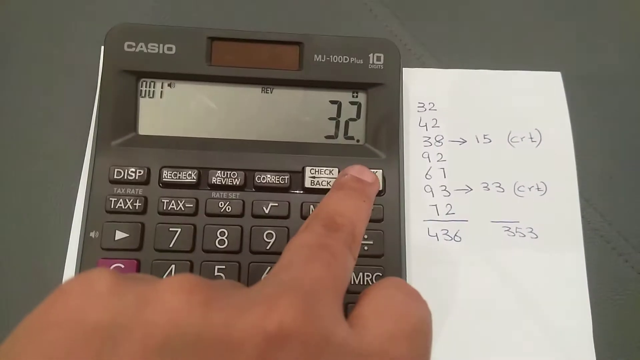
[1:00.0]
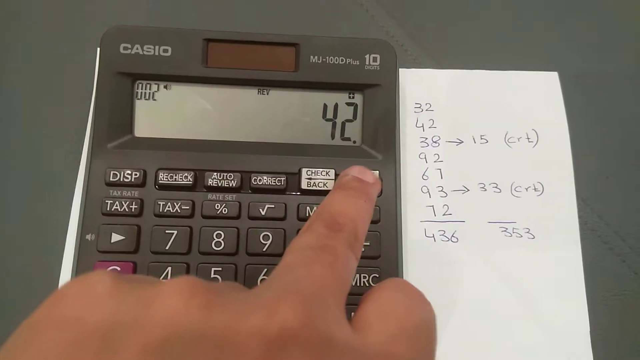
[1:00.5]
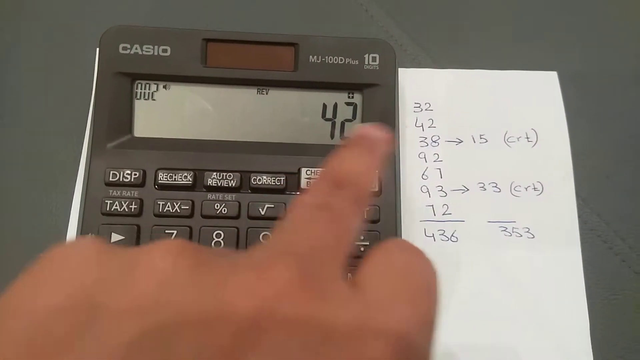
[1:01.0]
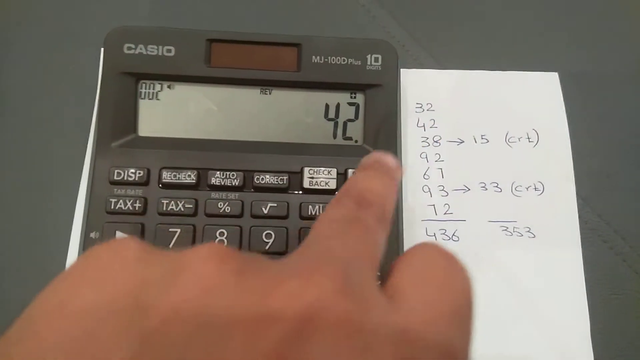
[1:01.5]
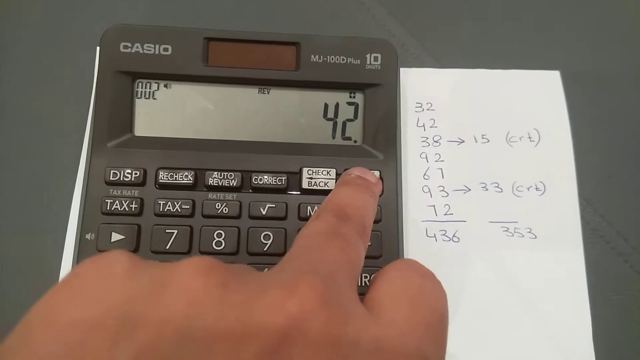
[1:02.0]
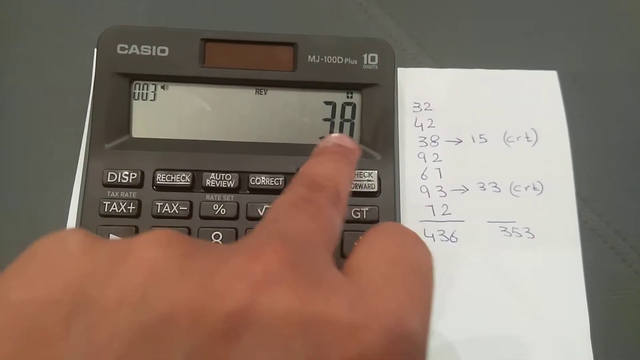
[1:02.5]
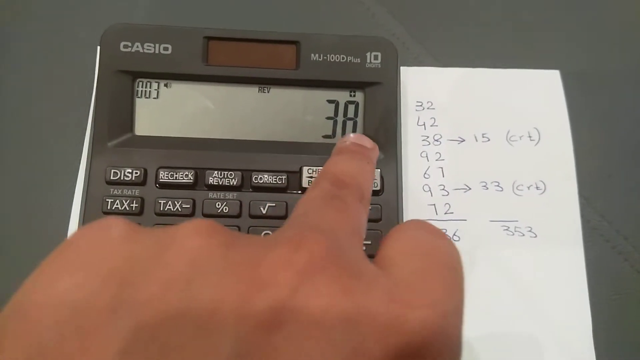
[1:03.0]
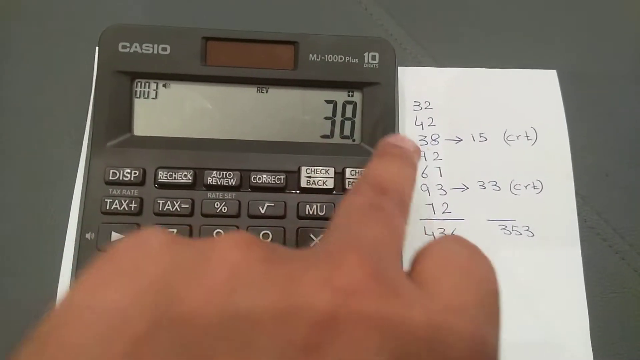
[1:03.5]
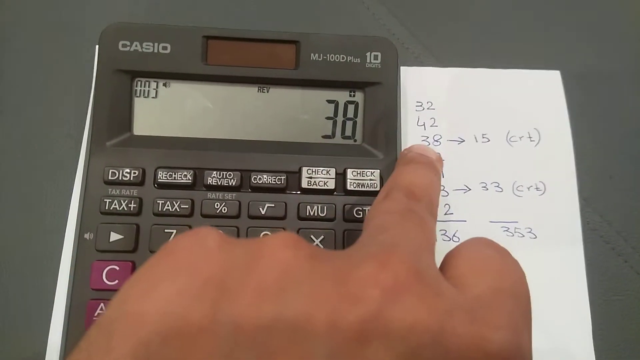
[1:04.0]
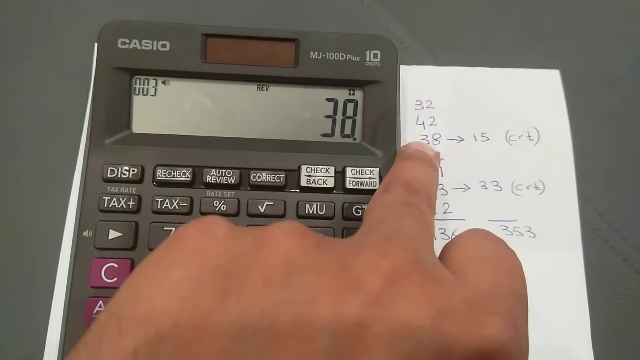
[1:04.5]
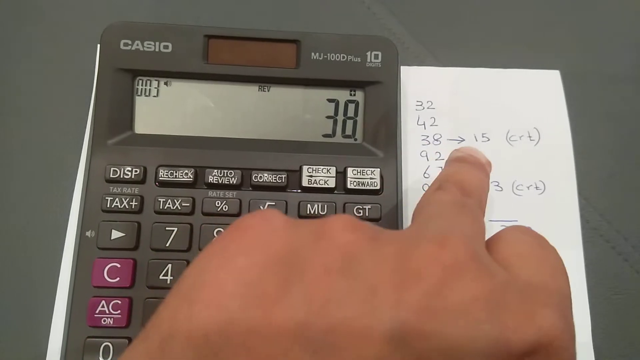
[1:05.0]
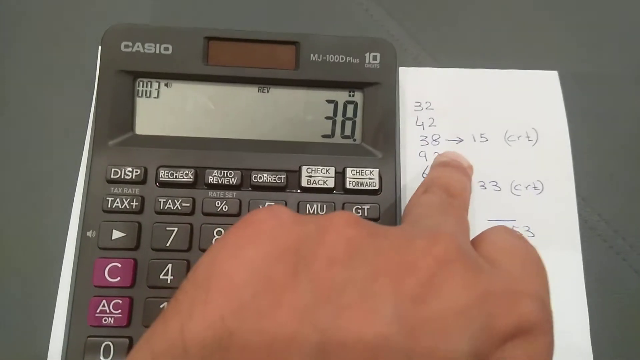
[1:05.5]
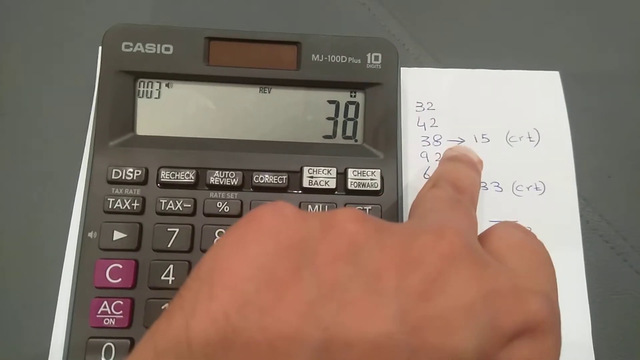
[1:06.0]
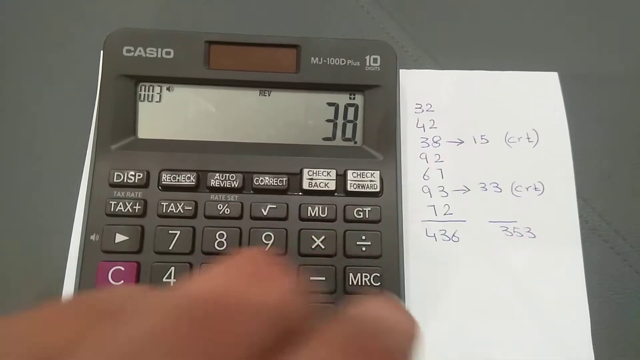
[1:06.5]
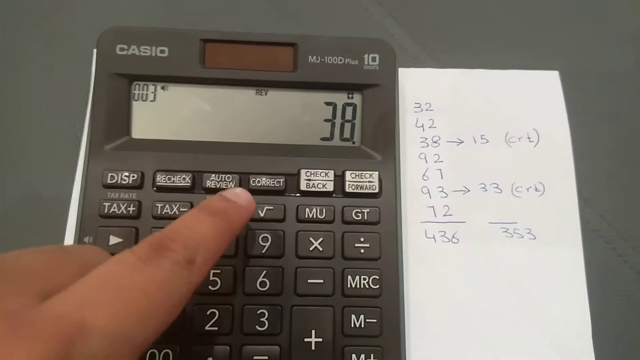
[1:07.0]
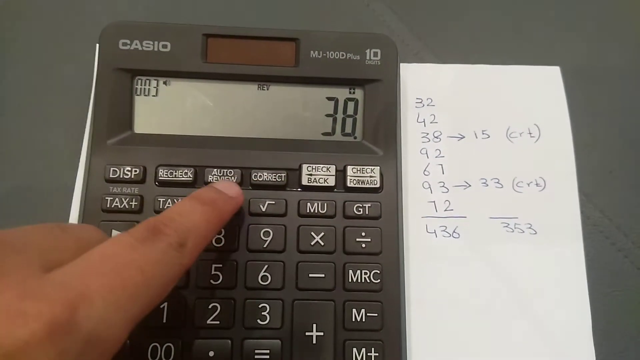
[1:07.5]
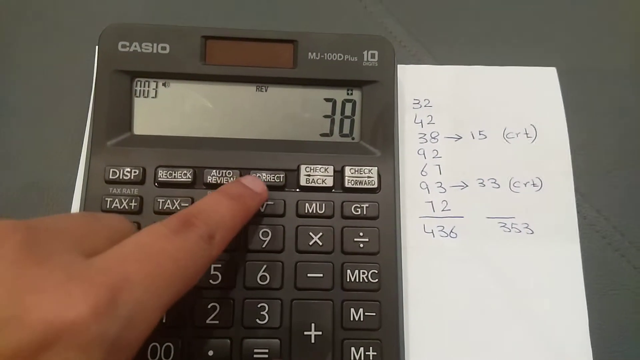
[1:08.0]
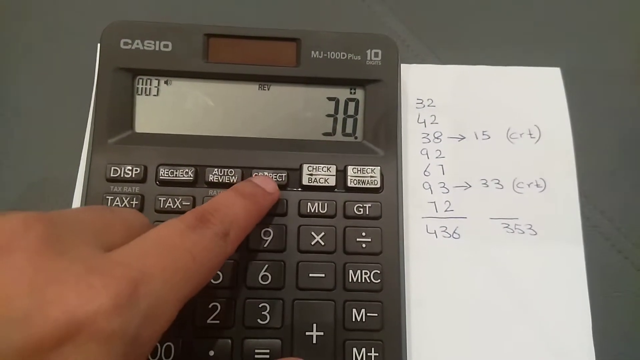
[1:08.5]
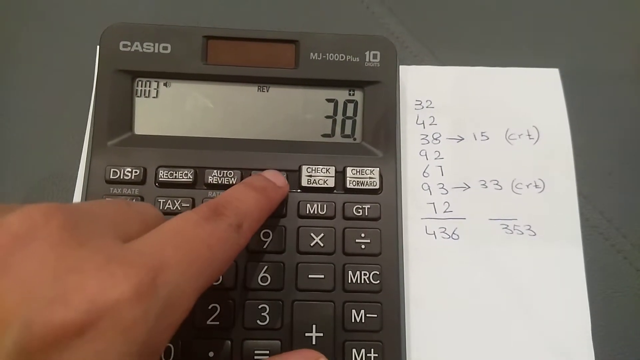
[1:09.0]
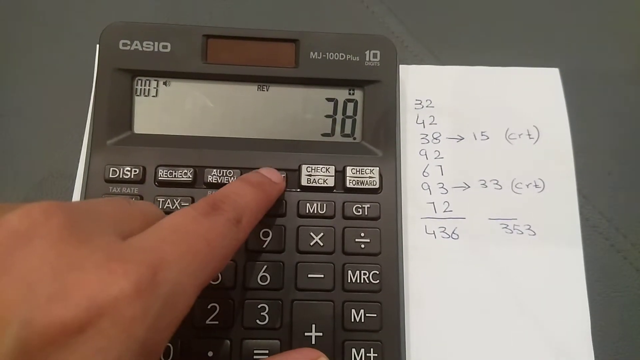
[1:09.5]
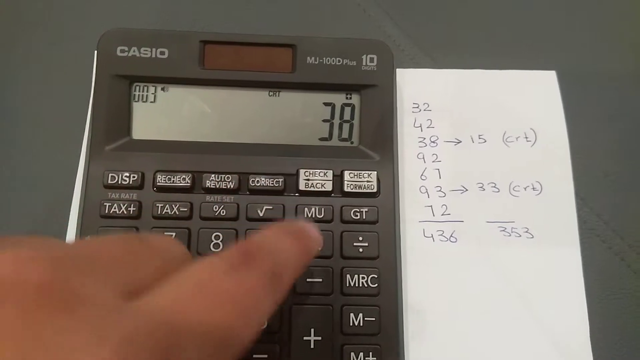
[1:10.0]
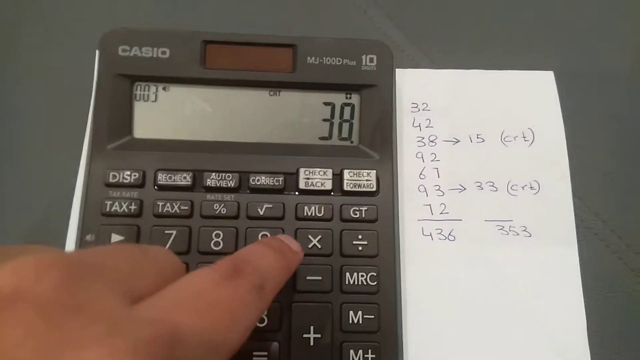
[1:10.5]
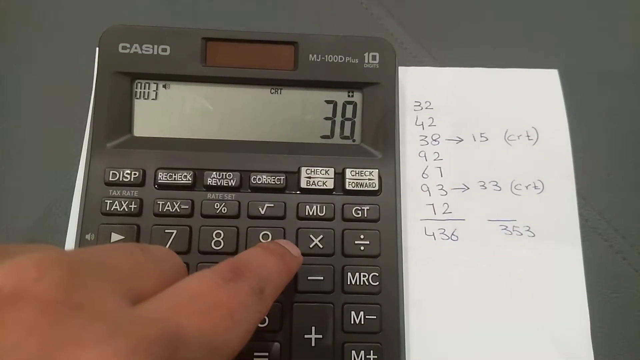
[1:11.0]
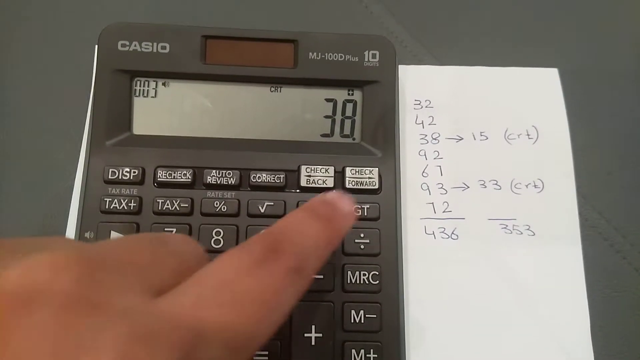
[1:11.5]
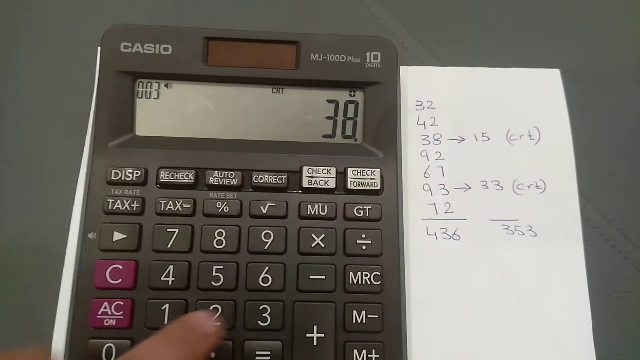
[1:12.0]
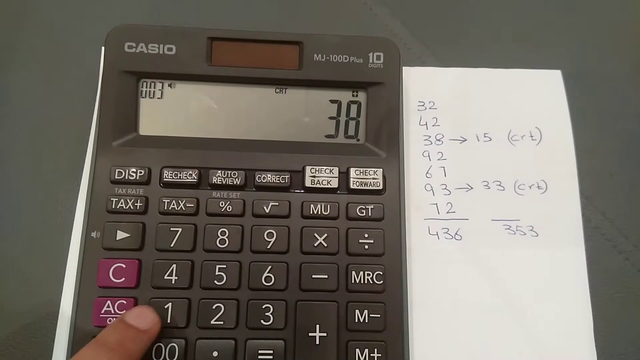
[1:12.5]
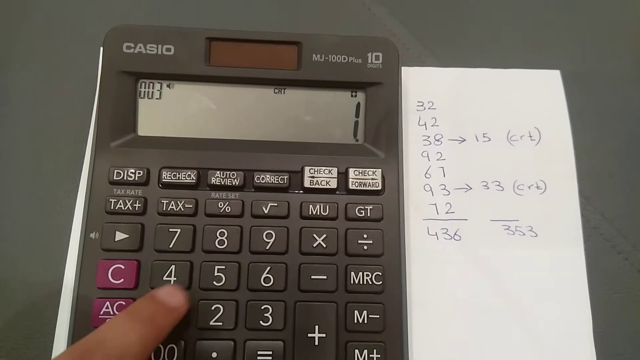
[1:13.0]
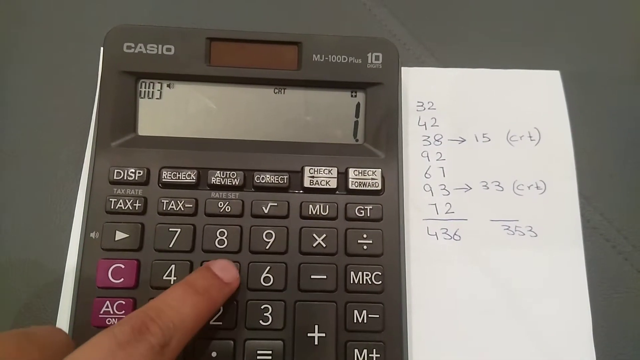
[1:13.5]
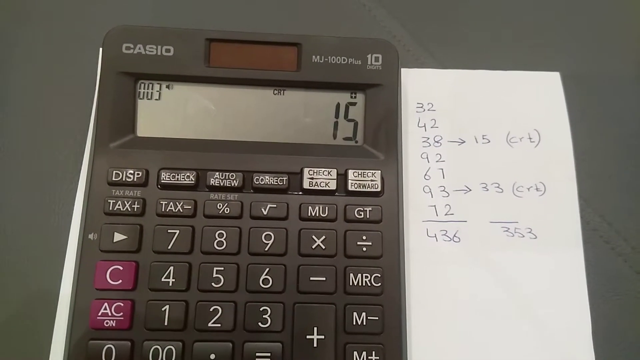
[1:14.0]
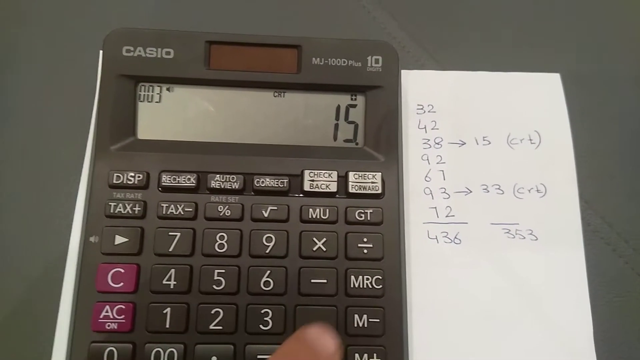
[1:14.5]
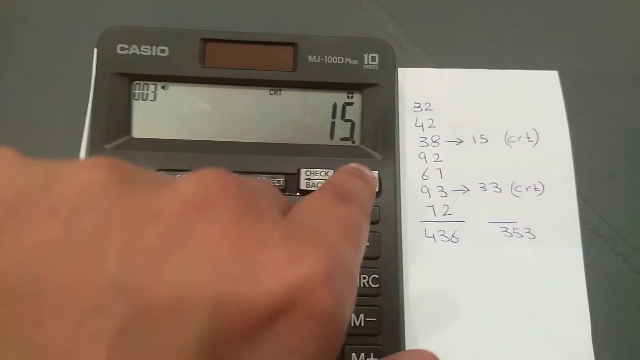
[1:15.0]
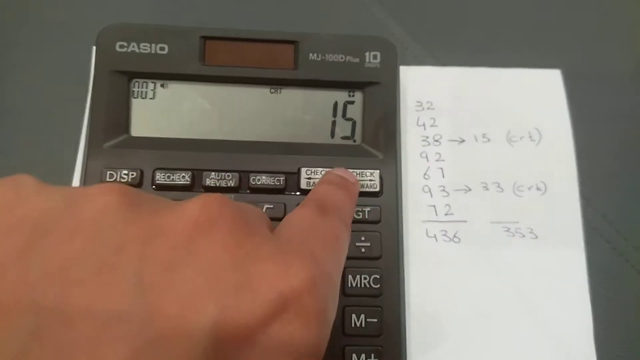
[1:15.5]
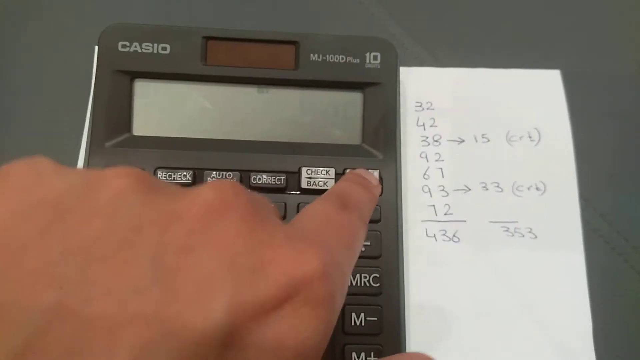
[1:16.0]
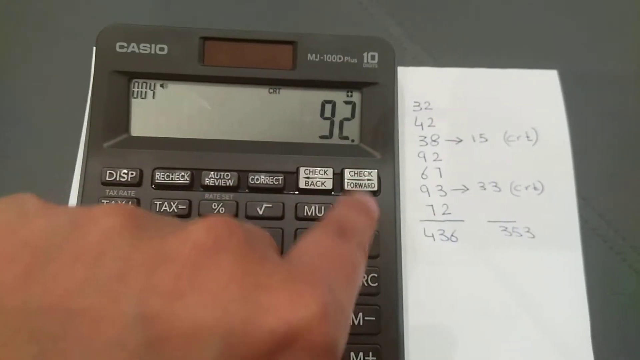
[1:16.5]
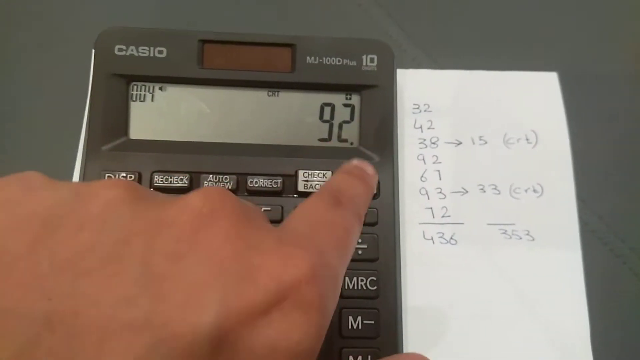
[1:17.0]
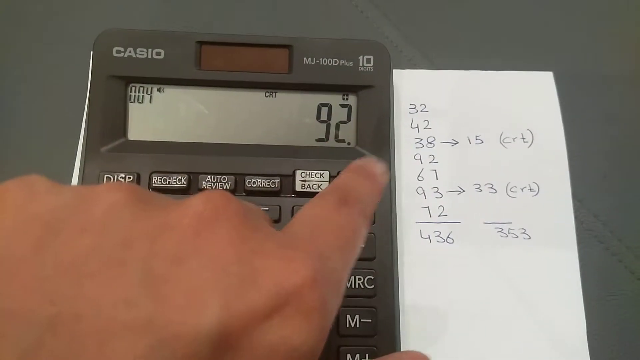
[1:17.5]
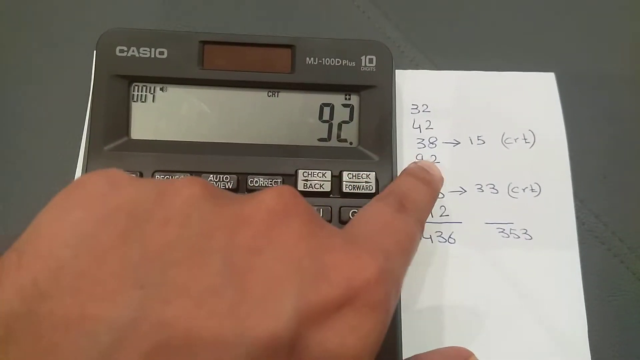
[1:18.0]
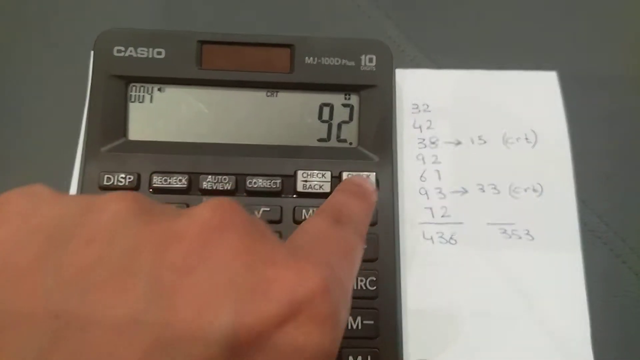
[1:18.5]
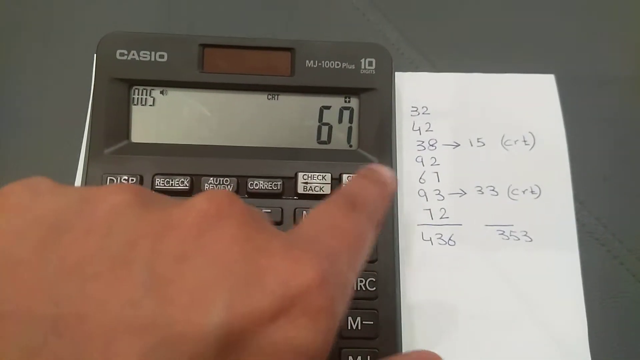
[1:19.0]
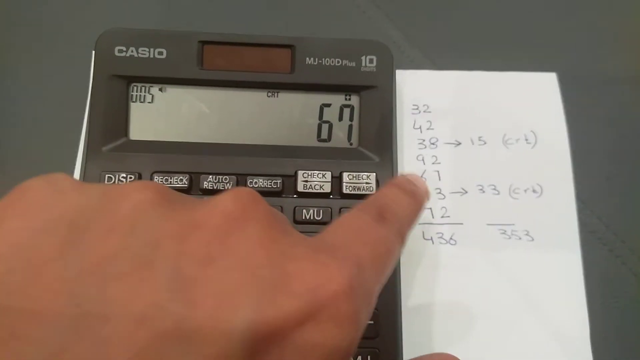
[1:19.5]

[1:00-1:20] The display starts with the number 32. The person presses the check forward button at the end of the top row of buttons, and the display changes to 42, the second number on the list. They press check forward a third time and it changes to 38, the third number on the list. On the paper, the written 38 has an arrow pointing to the right. They press the correct button, input the number 15, and press check forward, and the display turns to 92, the next number on the list after 38. When the button at the top labeled "correct" is pressed, the small letters and words at the very top of the display screen change to "CRT".